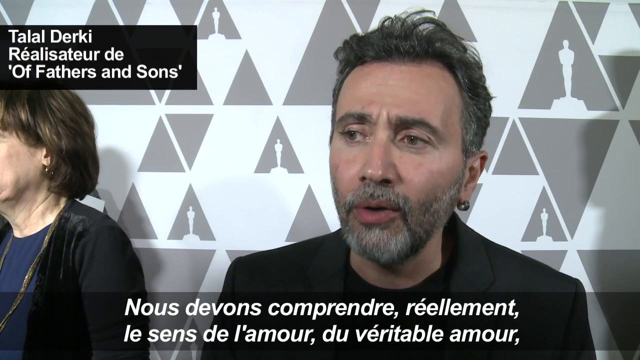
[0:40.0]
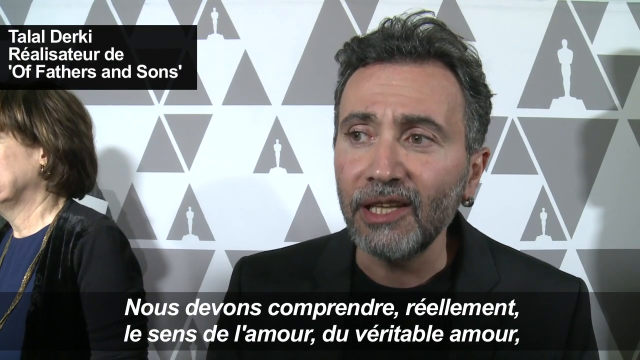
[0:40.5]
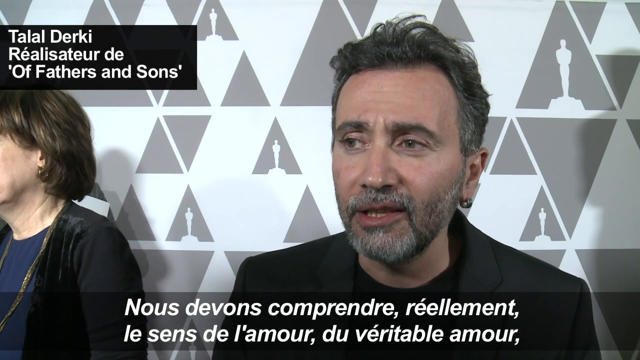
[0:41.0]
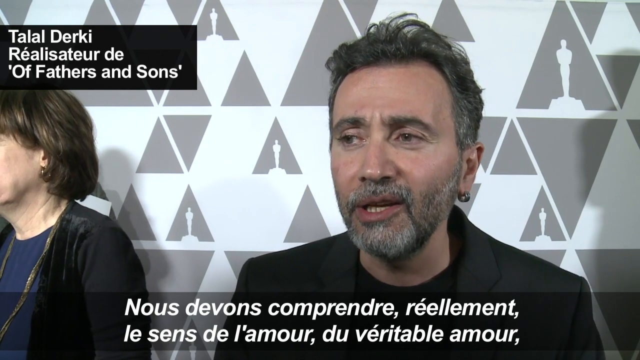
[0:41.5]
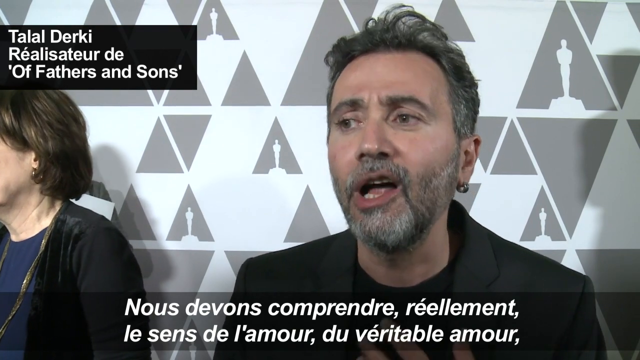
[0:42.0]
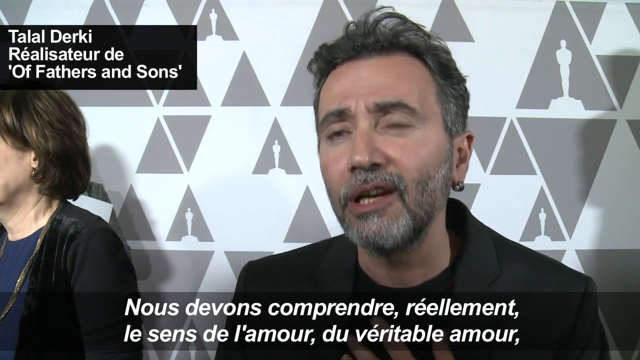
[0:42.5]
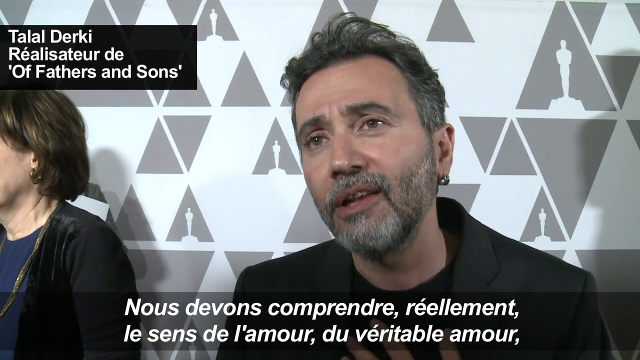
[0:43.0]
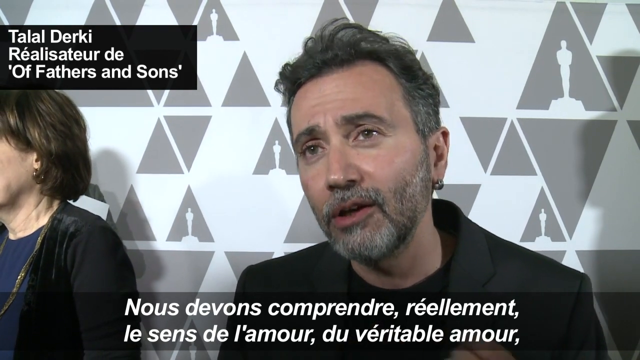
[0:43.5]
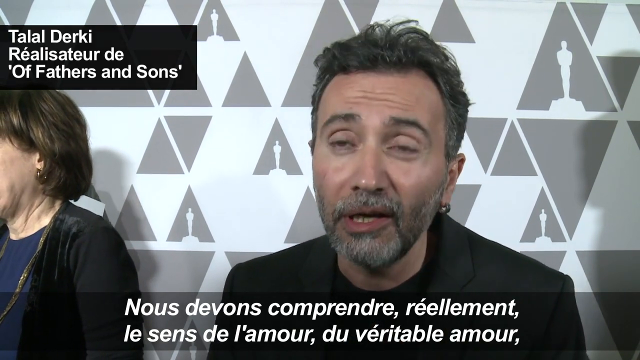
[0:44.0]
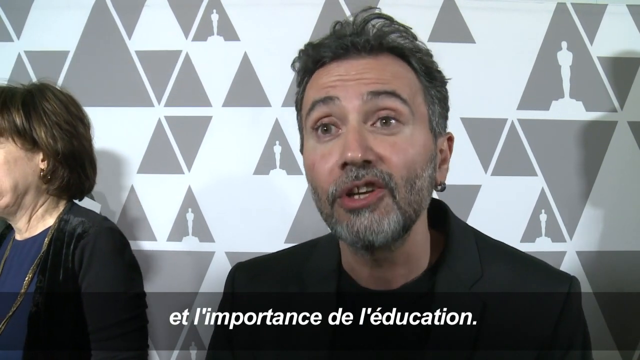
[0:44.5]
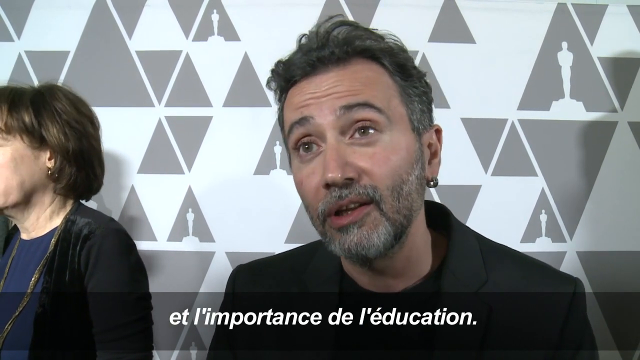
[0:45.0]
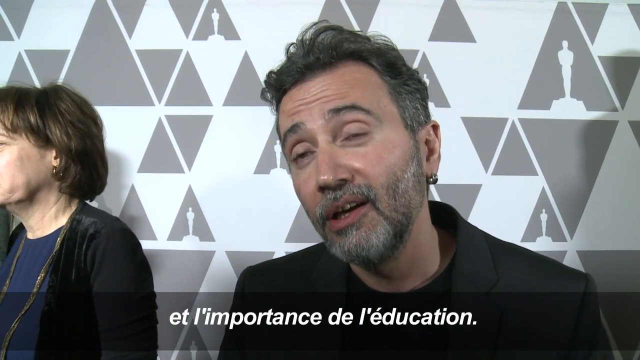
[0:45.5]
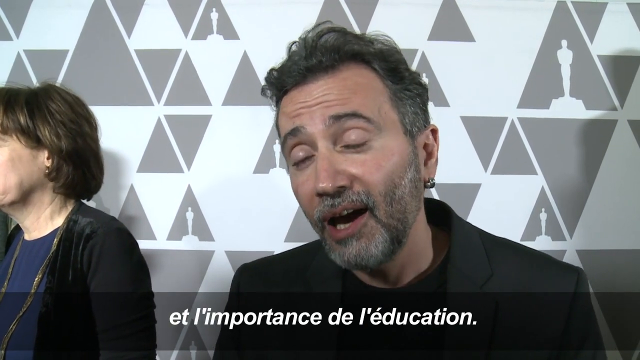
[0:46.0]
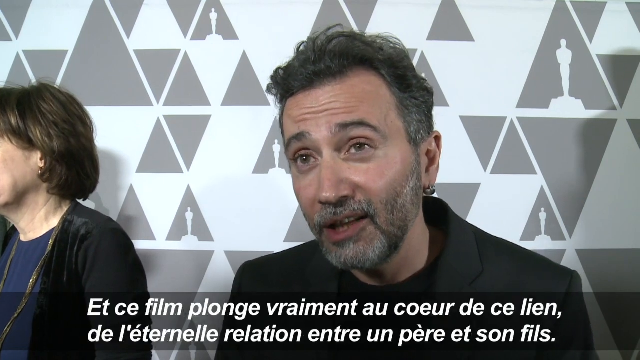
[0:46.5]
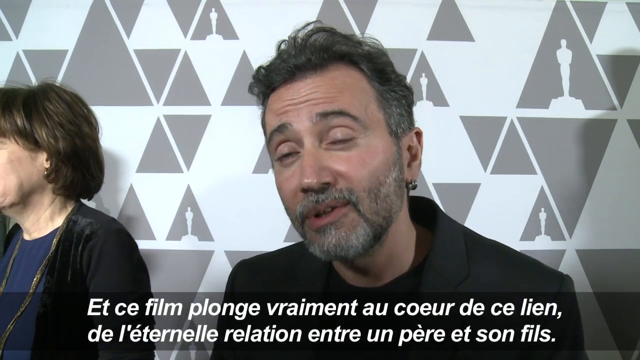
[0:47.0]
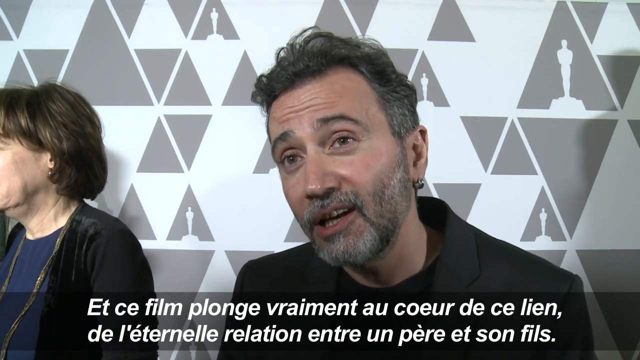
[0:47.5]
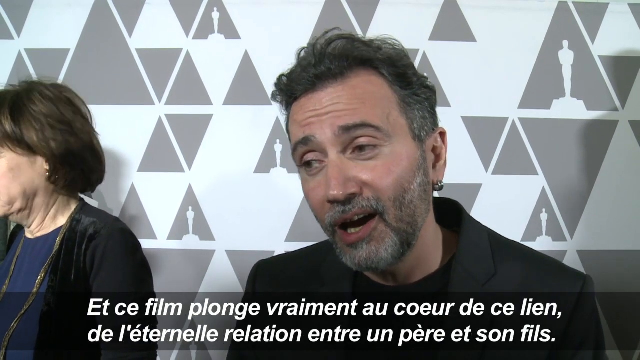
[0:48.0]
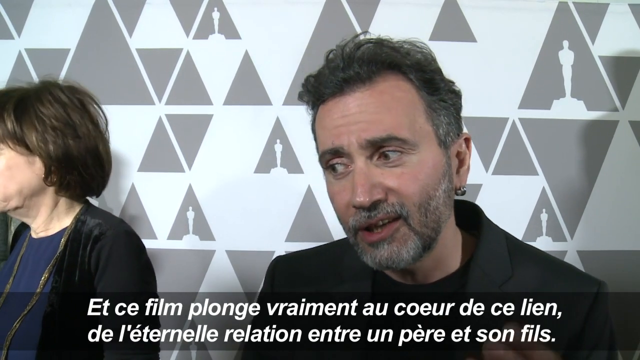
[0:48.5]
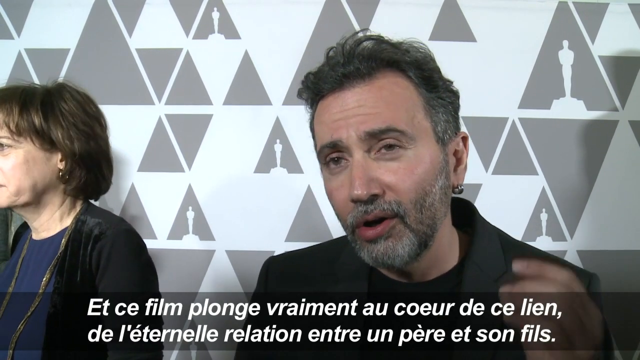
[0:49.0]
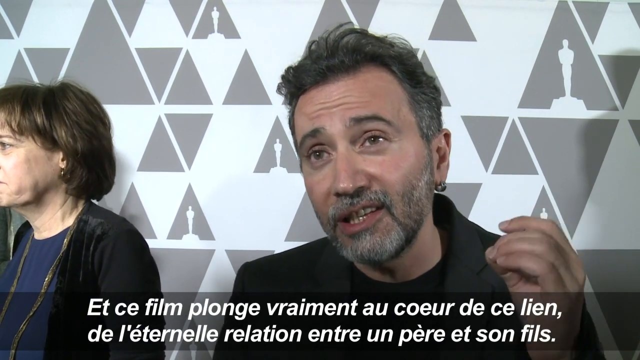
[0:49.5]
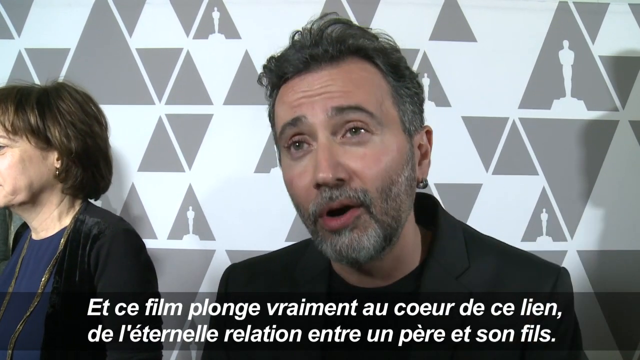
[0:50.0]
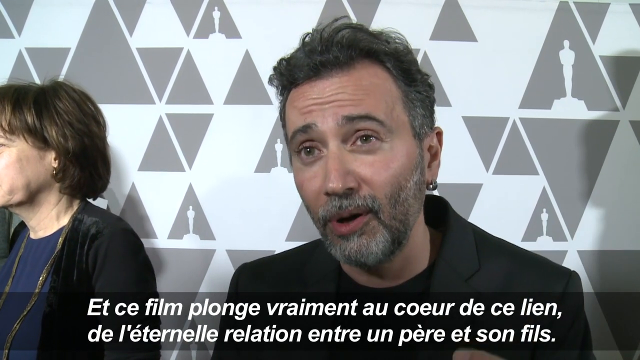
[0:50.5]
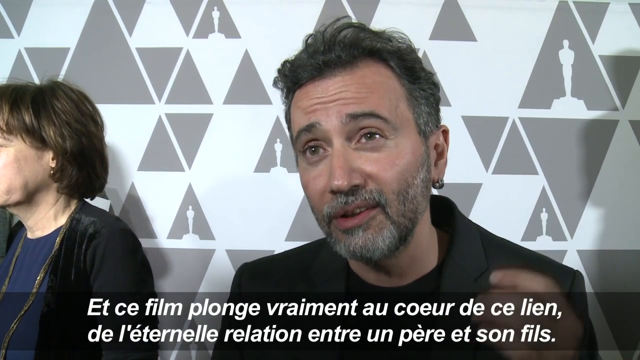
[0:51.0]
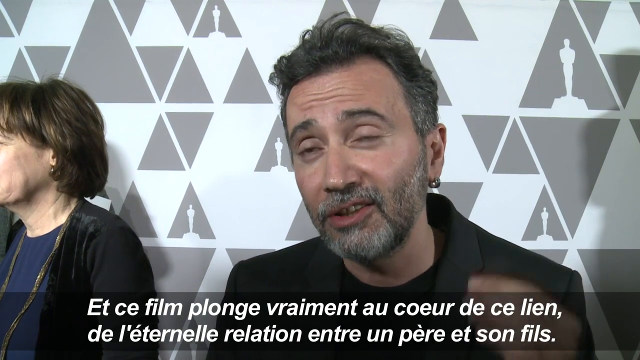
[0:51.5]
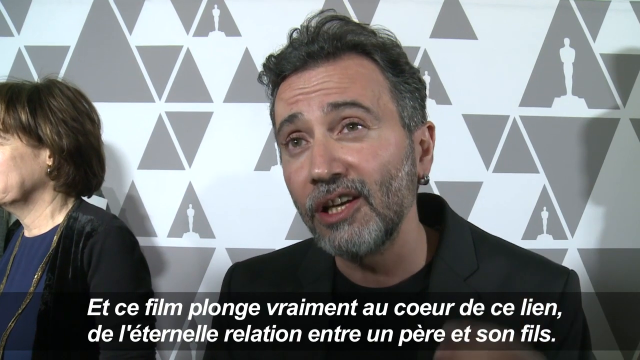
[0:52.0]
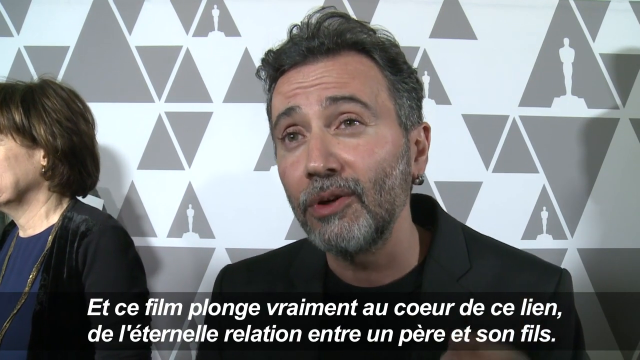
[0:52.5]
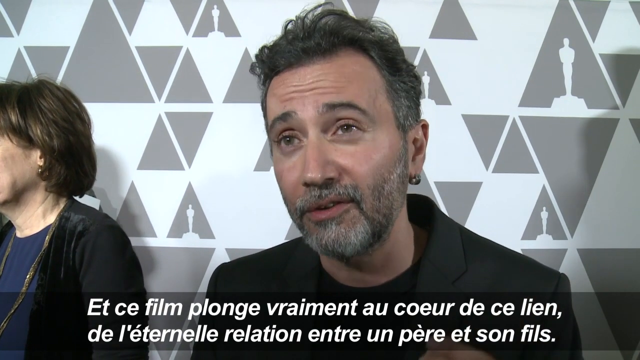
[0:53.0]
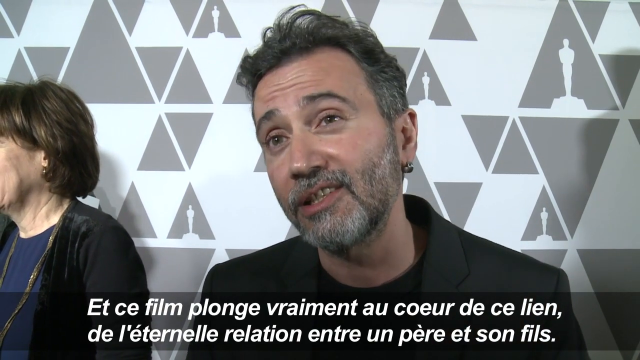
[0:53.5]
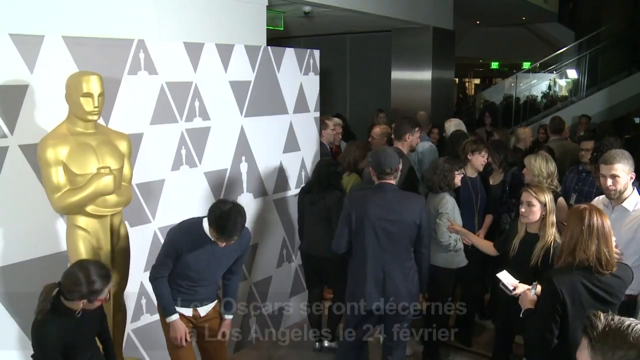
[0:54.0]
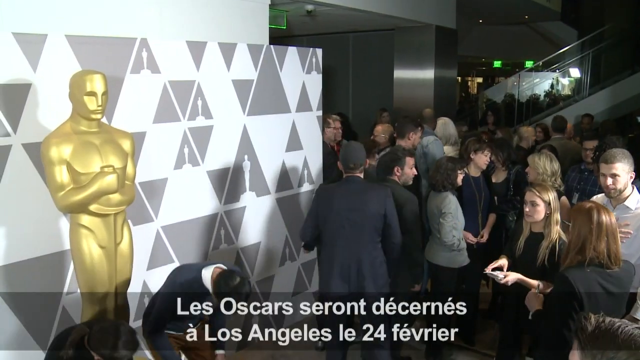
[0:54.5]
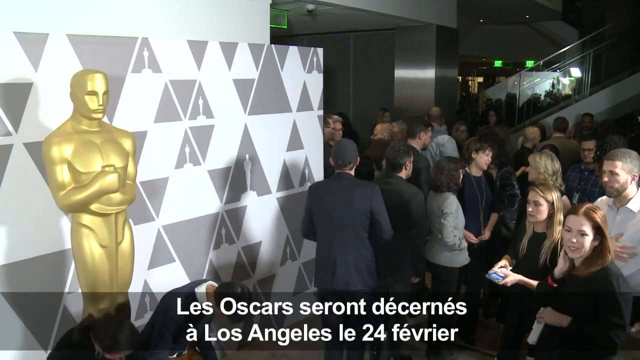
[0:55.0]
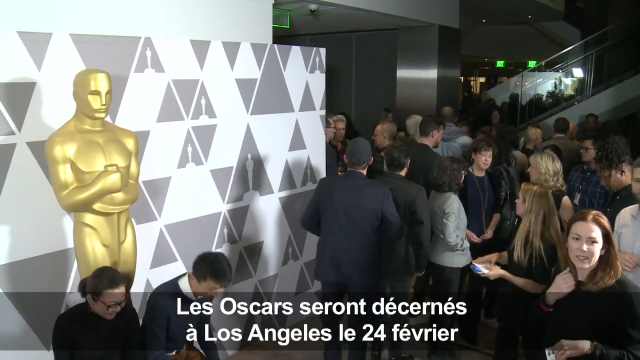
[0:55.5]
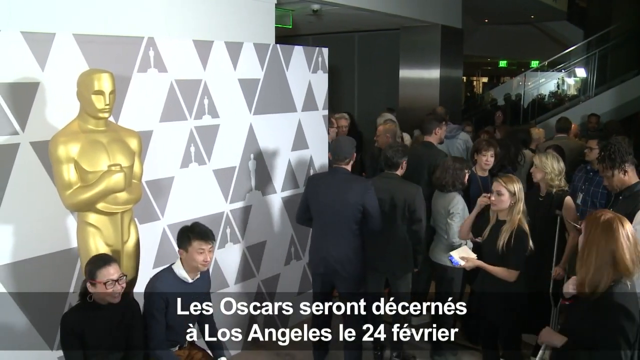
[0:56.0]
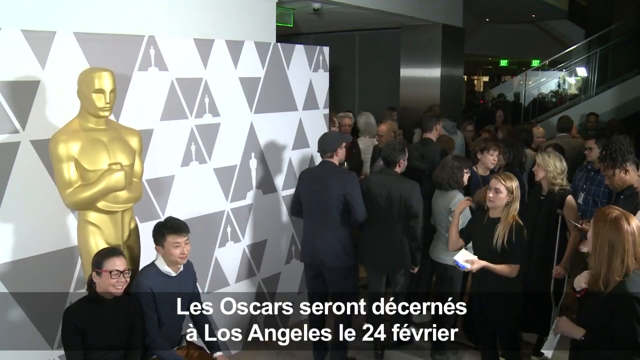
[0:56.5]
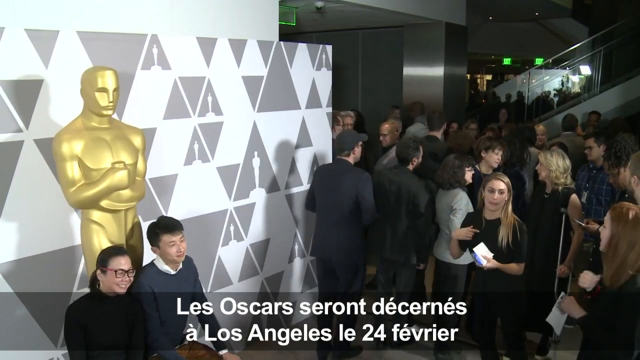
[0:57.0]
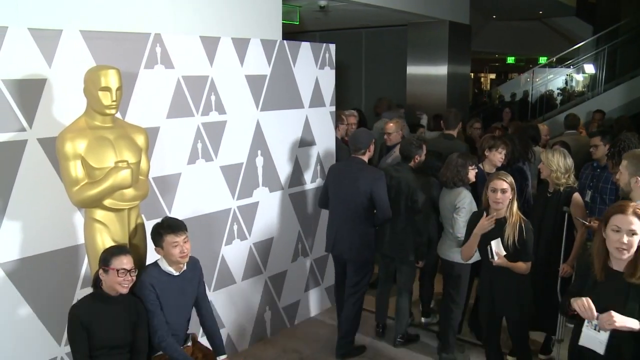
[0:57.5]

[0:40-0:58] The camera is focused on Claude Derty, who has gray hair, very defined eyebrows and a full gray beard. He wears an earring and a black suit with a black shirt. He looks off into space as if trying to stare at somebody. French subtitles run along the bottom and constantly change. The event appears to be some sort of Academy Awards. As he answers questions he looks happy and seems to try to make sure he answers them properly, at times lifting his left hand to make motions that define his words. Afterward, the view shows a very large group crowded around the area where the celebrities stand next to the statue, trying to ask questions and take photos; it looks very hectic.